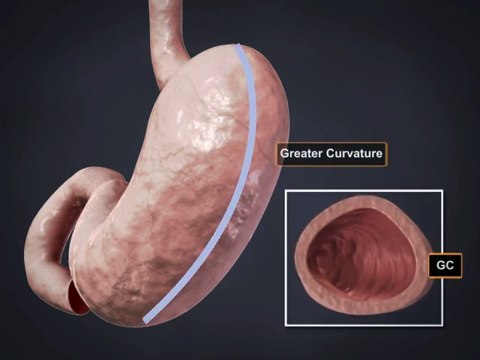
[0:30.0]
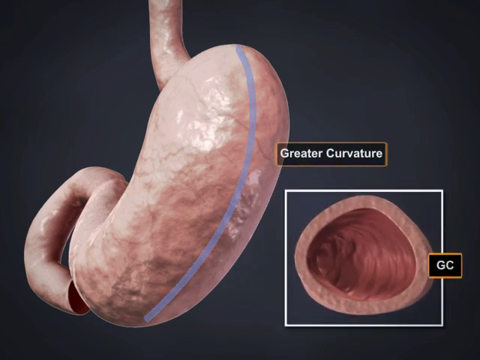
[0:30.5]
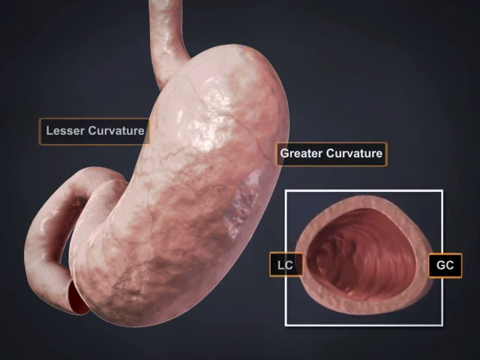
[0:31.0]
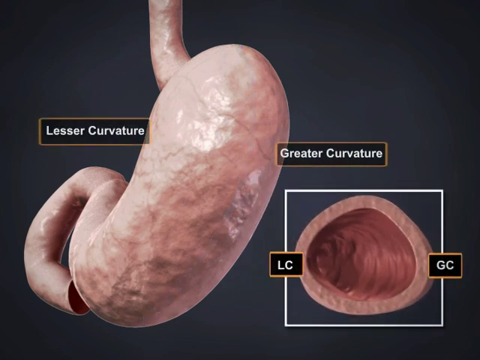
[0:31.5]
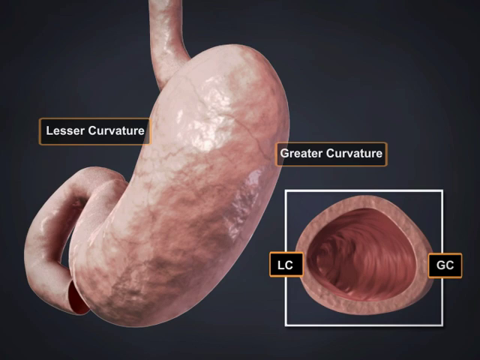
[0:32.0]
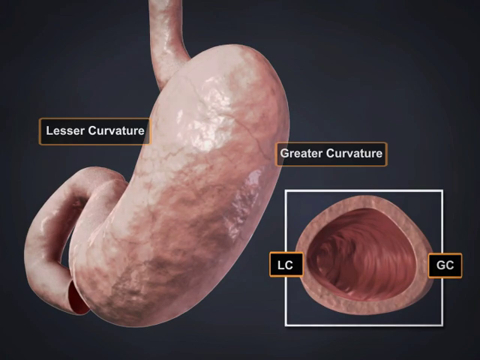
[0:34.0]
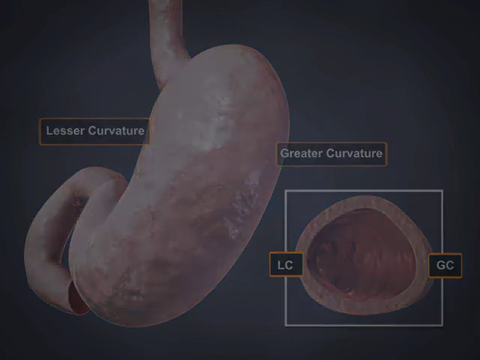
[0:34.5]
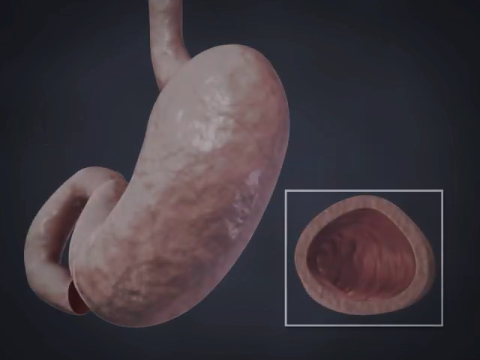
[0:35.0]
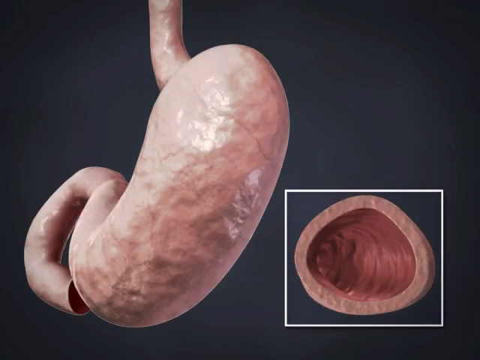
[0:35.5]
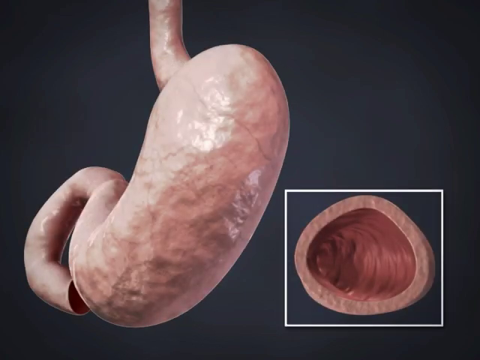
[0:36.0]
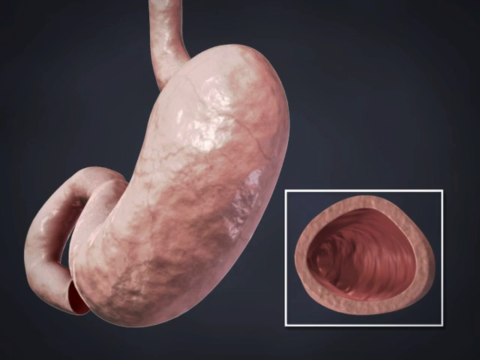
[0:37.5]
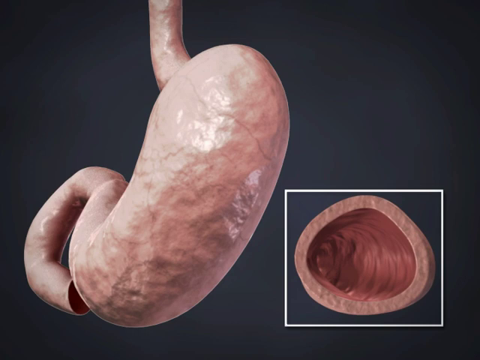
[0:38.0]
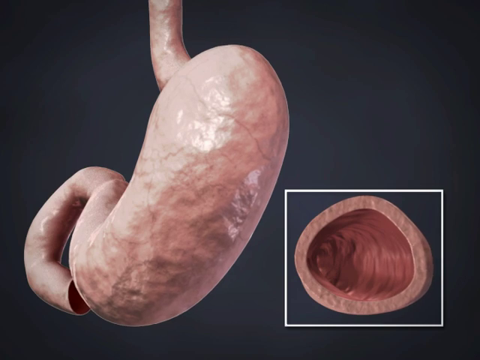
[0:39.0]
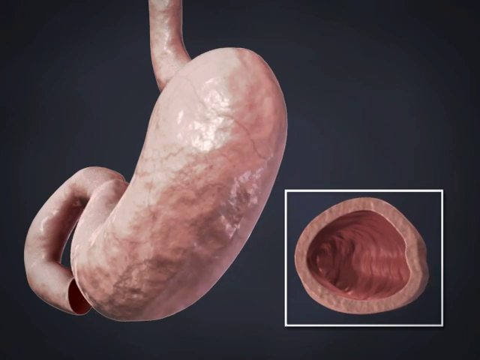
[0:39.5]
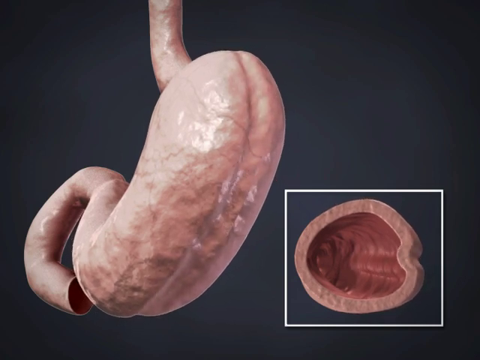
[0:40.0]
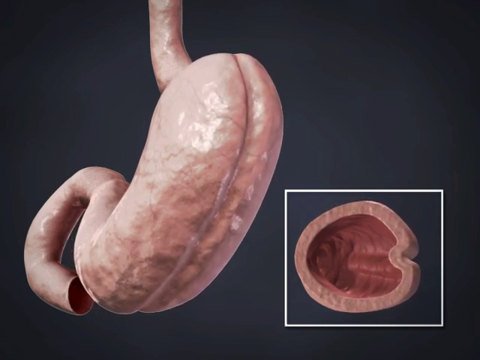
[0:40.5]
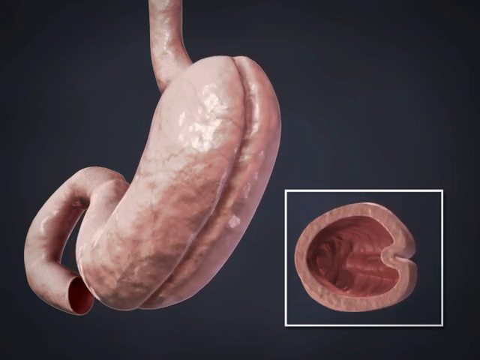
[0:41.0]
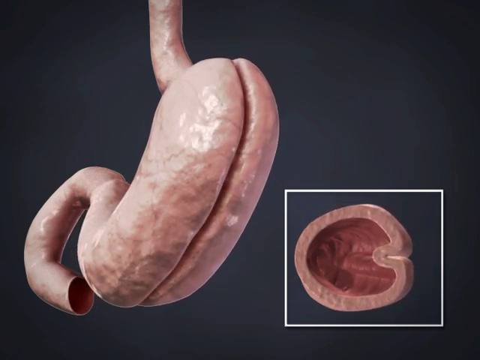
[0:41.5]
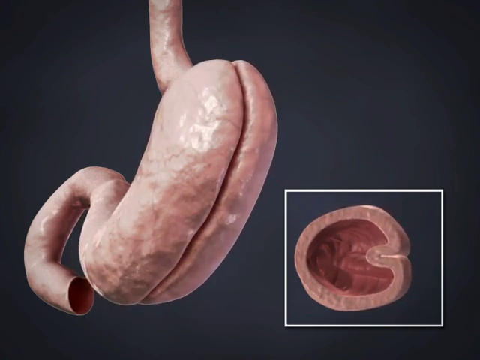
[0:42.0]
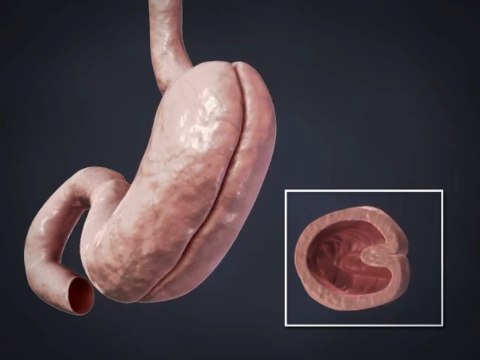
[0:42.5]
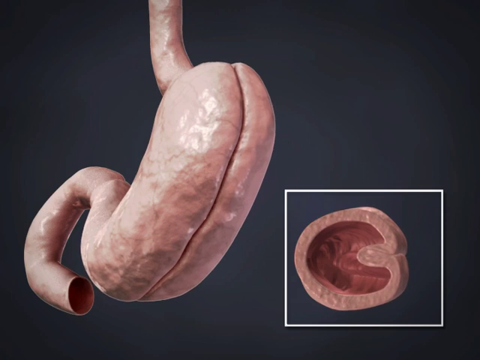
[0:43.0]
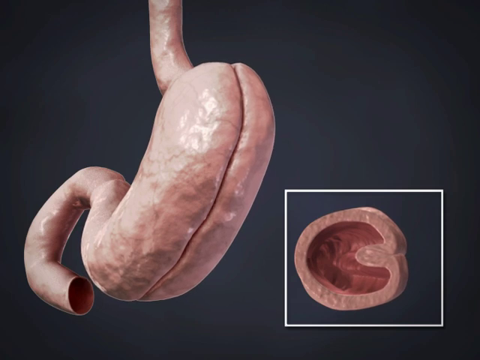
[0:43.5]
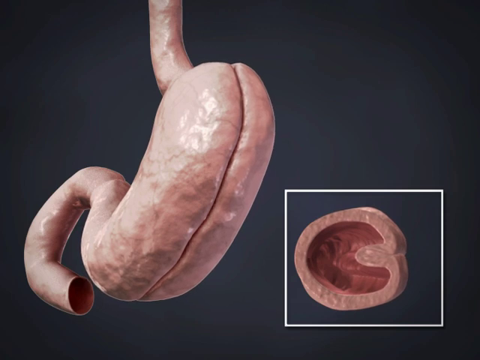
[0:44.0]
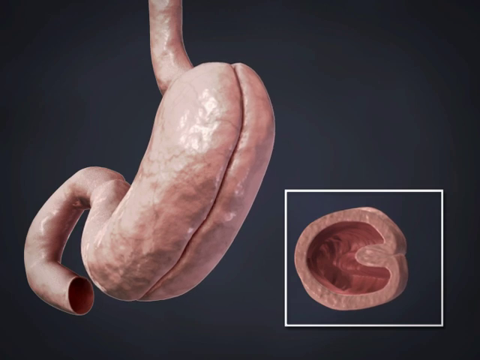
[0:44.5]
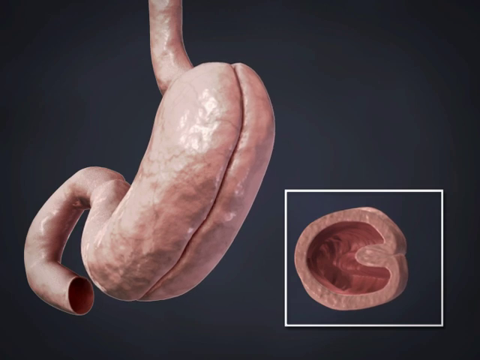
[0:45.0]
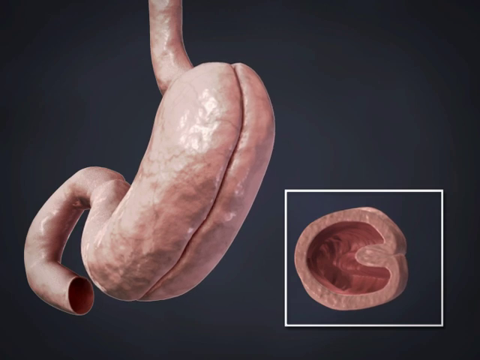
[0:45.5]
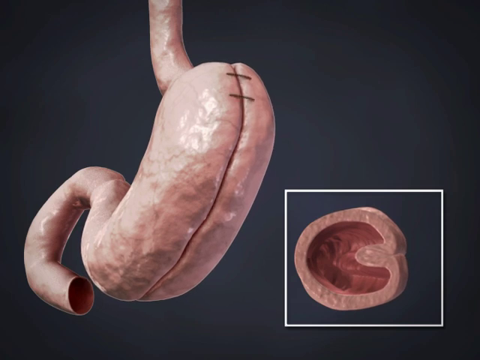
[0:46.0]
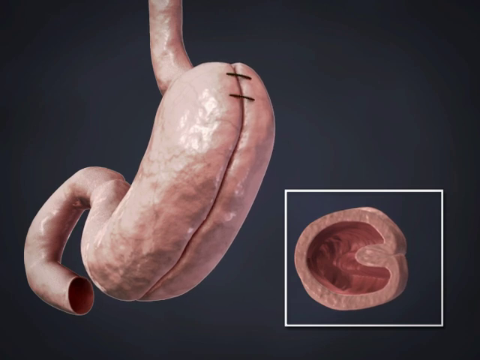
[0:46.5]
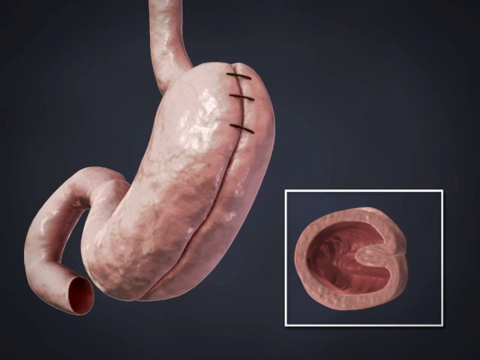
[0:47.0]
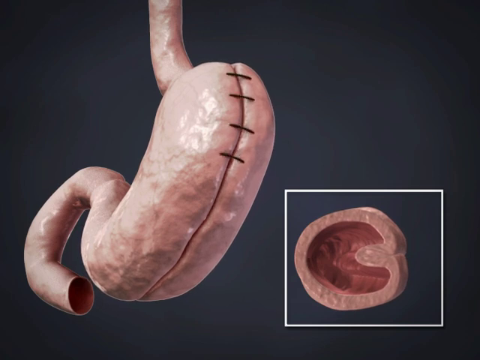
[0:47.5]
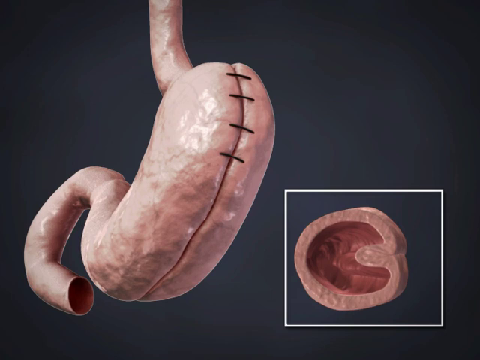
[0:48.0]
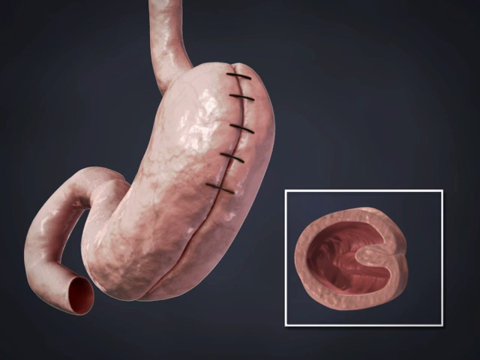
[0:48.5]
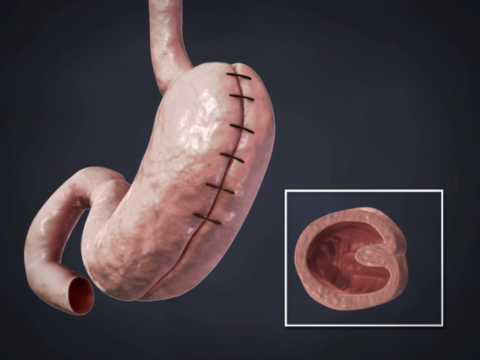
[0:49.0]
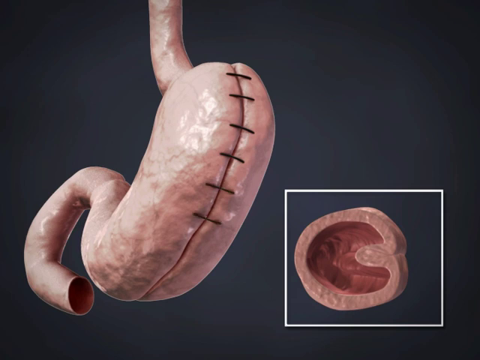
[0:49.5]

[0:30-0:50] An animation of a stomach plays on a black background, with "greater curvature" on the right side and "lesser curvature" on the left side. The stomach shrinks and then appears to split in two, possibly surgically, as stitches then appear along the top of the stomach, possibly holding two parts of it together. In the lower left corner is what is apparently the rest of the esophagus. In the lower right corner, a second animation shows the inner workings of the stomach, with thick stomach walls, and the letters "GC" appear on the right side of this lower animation.